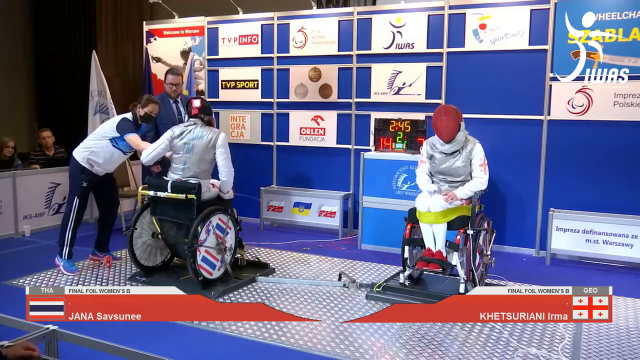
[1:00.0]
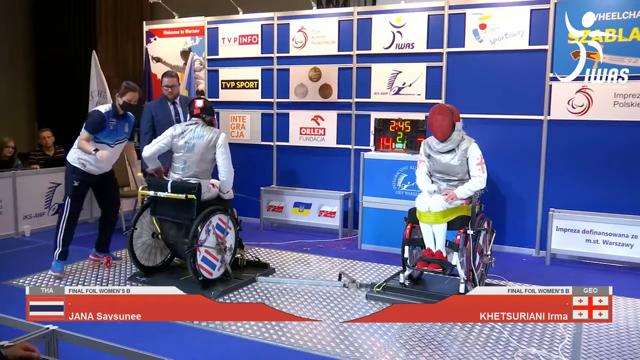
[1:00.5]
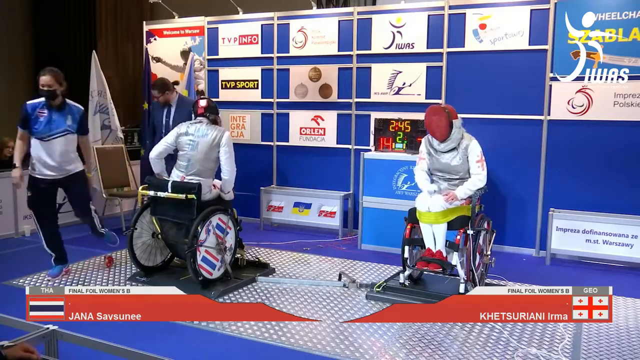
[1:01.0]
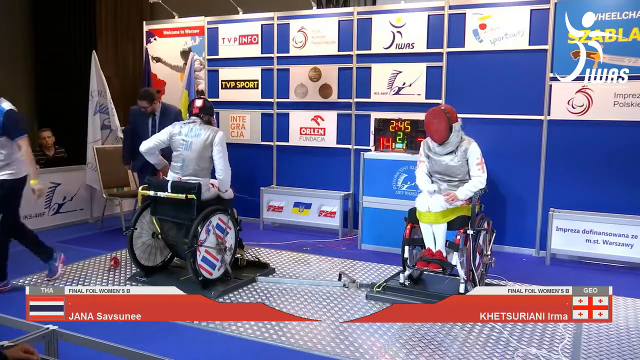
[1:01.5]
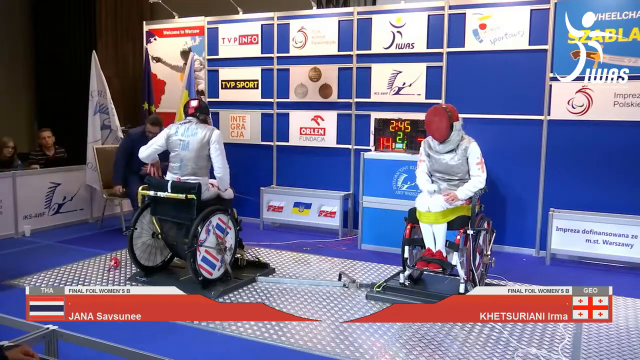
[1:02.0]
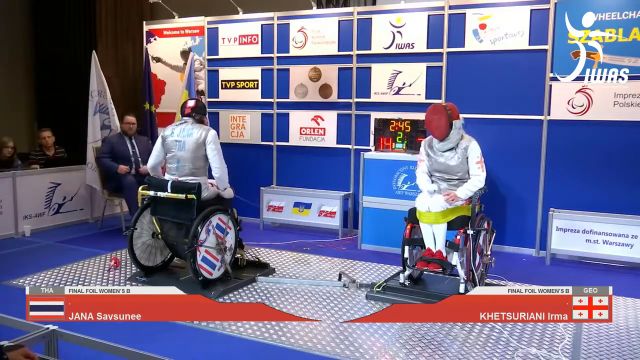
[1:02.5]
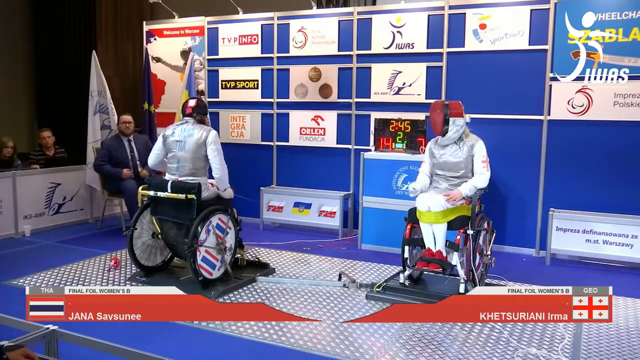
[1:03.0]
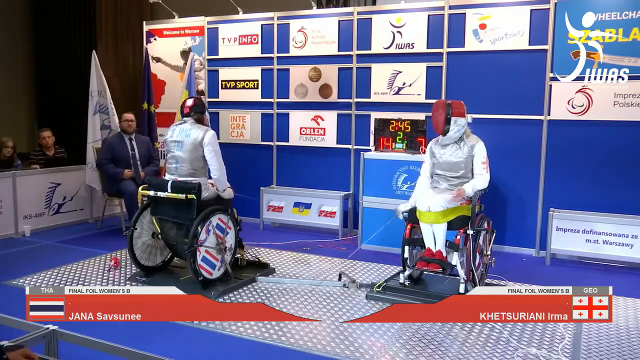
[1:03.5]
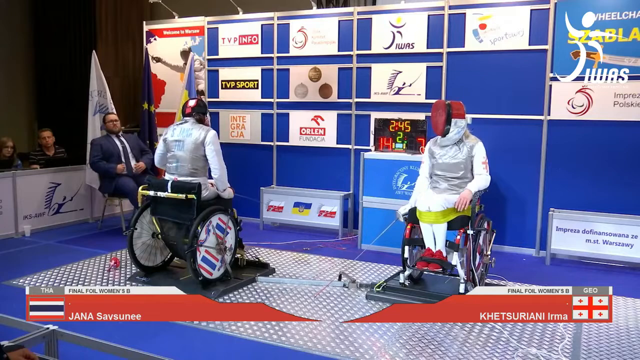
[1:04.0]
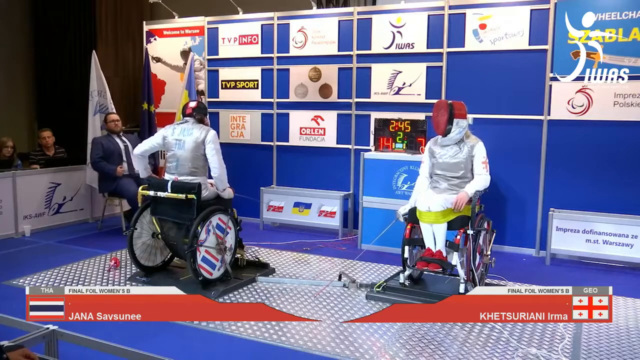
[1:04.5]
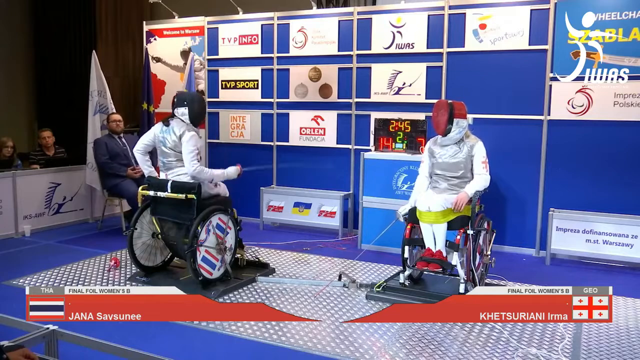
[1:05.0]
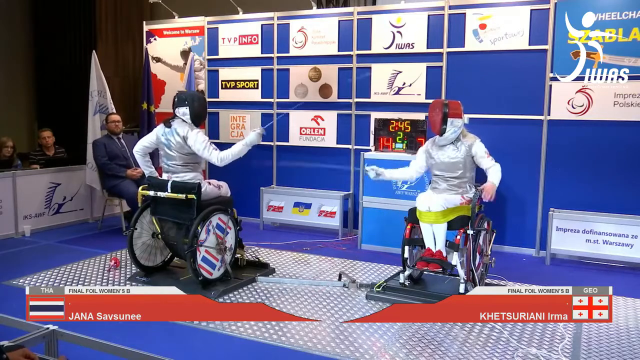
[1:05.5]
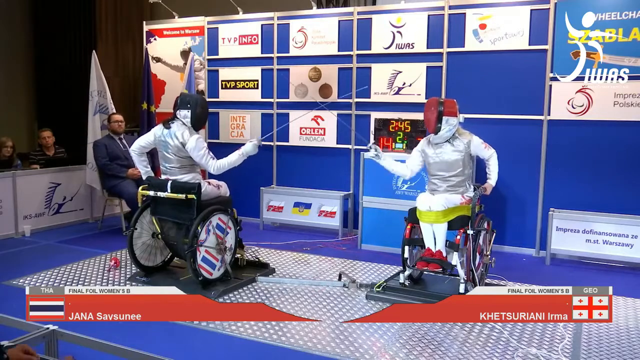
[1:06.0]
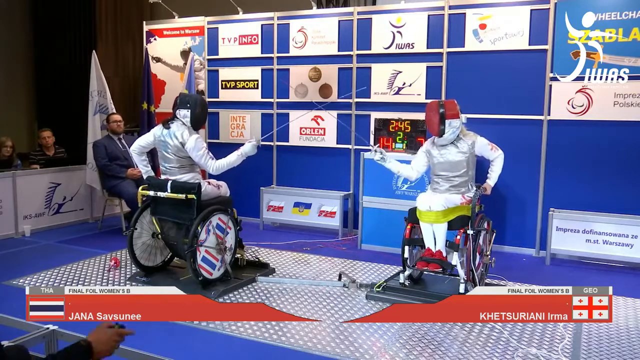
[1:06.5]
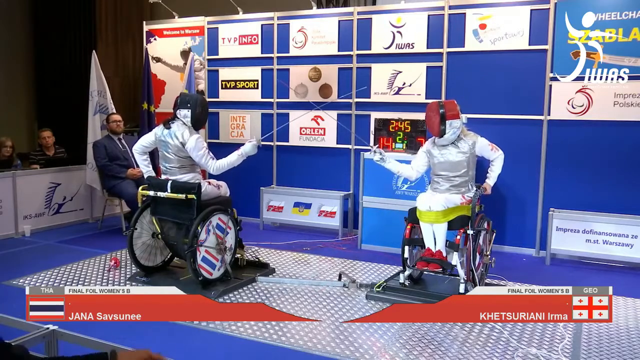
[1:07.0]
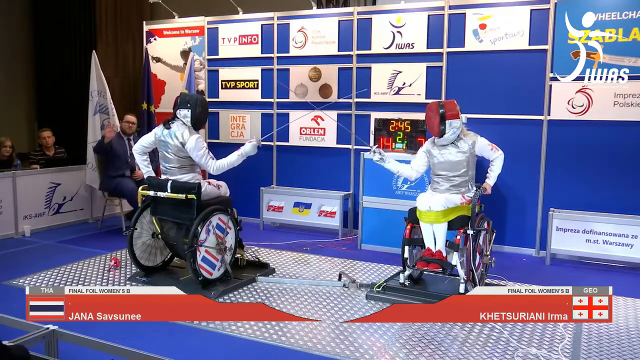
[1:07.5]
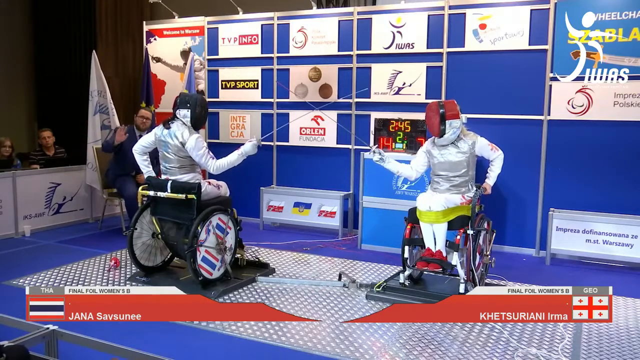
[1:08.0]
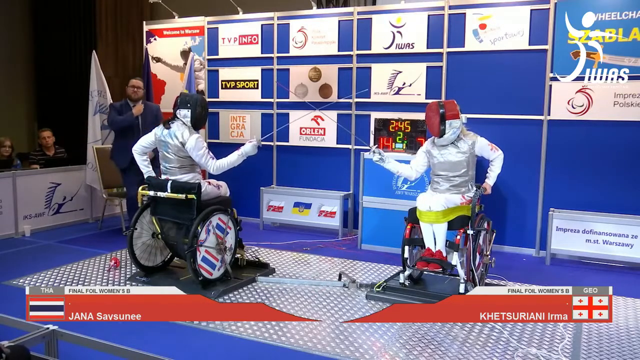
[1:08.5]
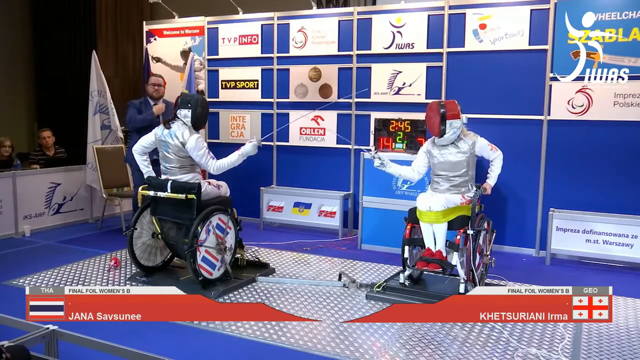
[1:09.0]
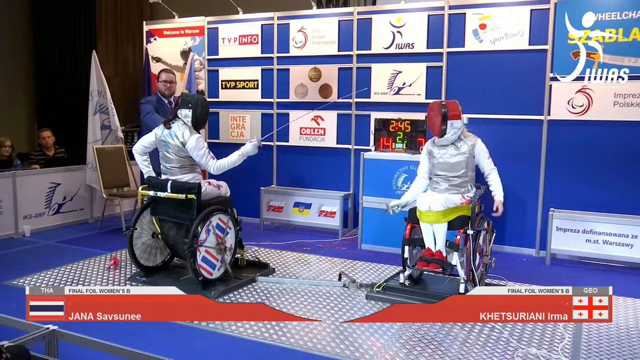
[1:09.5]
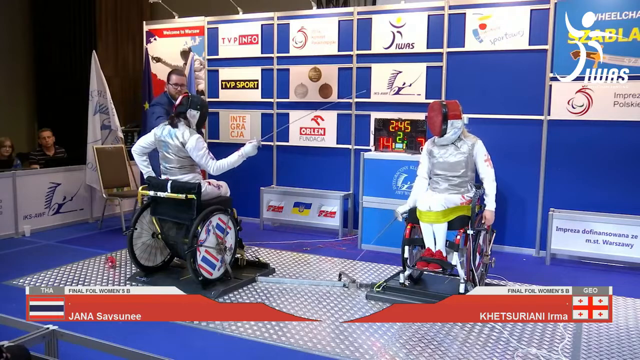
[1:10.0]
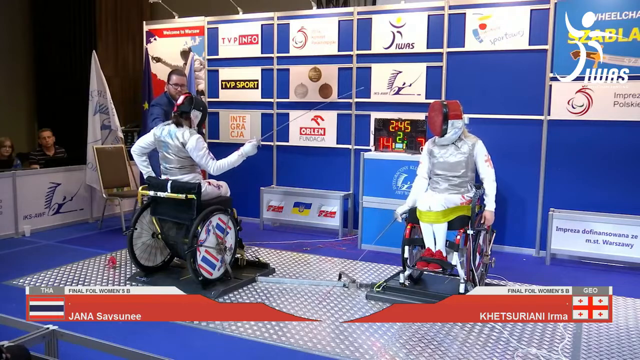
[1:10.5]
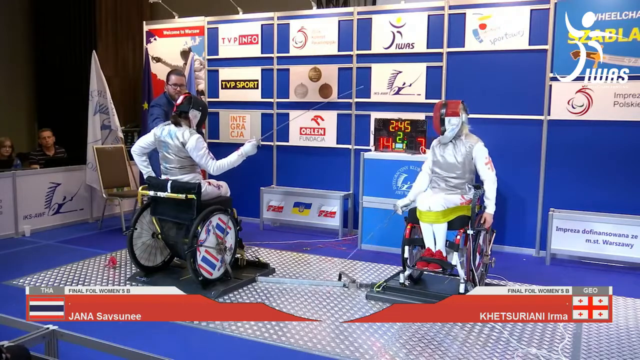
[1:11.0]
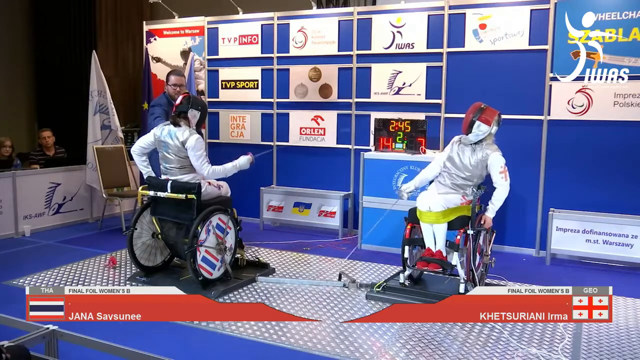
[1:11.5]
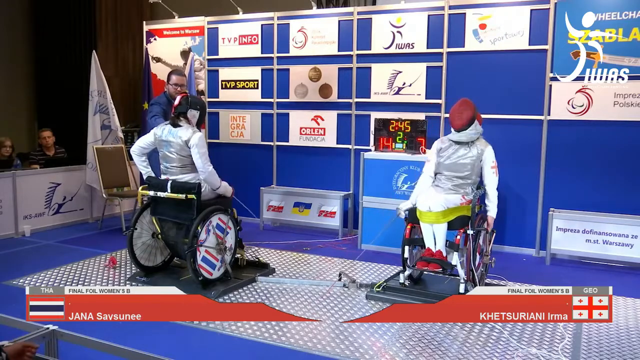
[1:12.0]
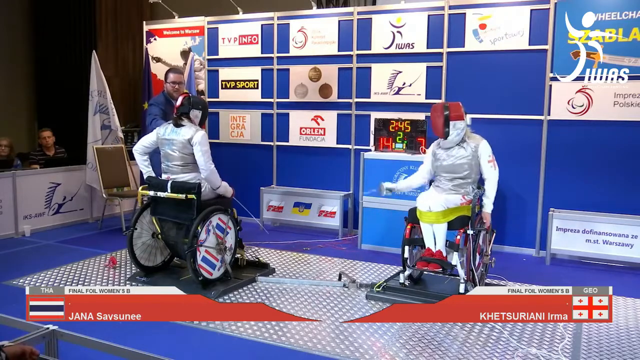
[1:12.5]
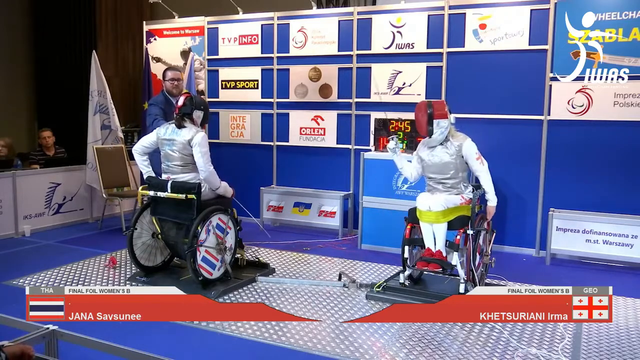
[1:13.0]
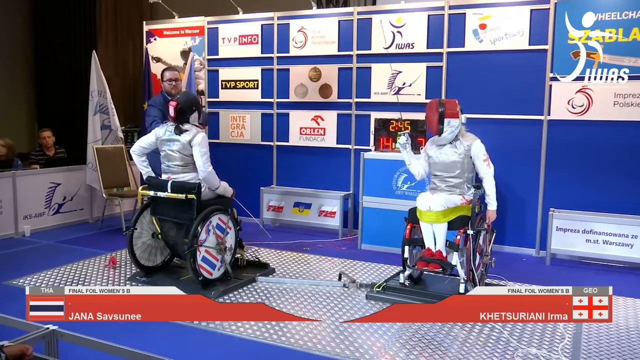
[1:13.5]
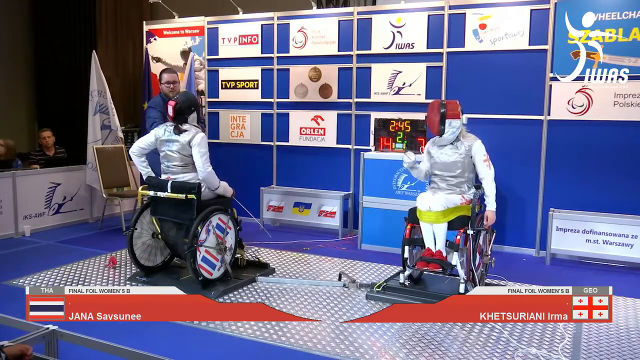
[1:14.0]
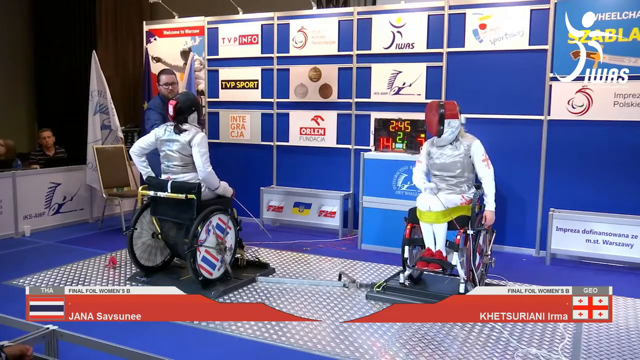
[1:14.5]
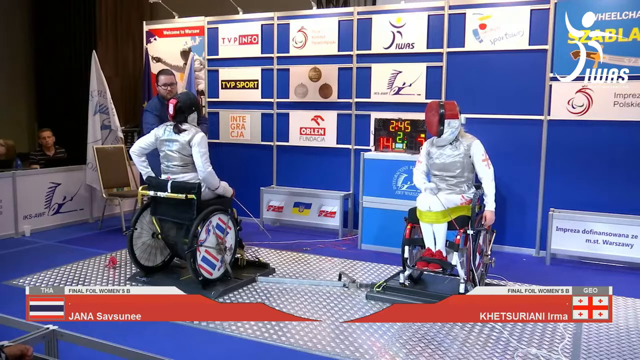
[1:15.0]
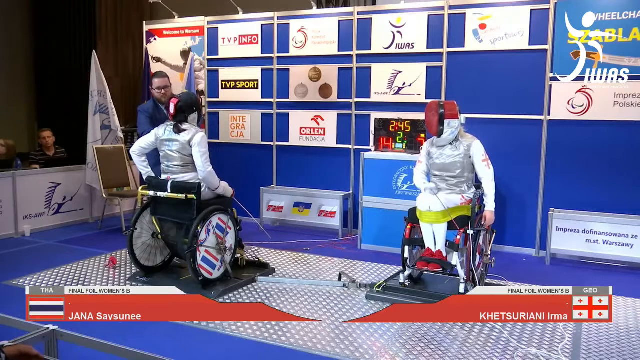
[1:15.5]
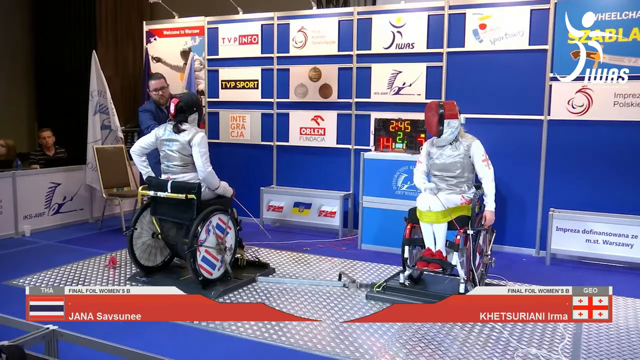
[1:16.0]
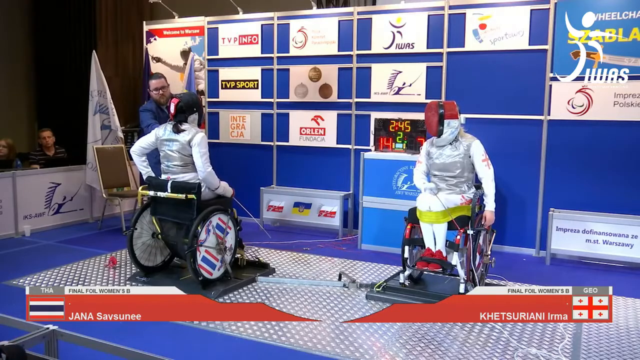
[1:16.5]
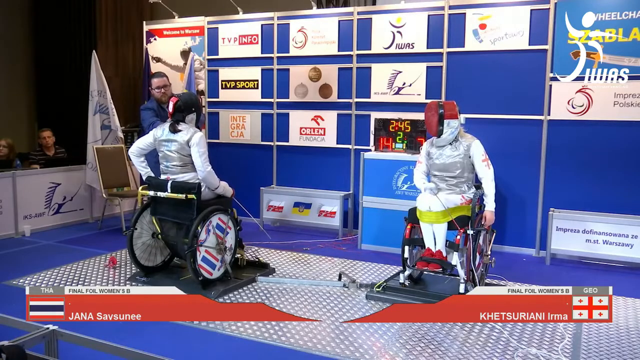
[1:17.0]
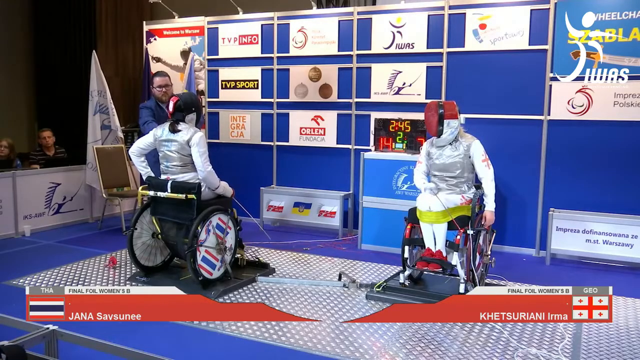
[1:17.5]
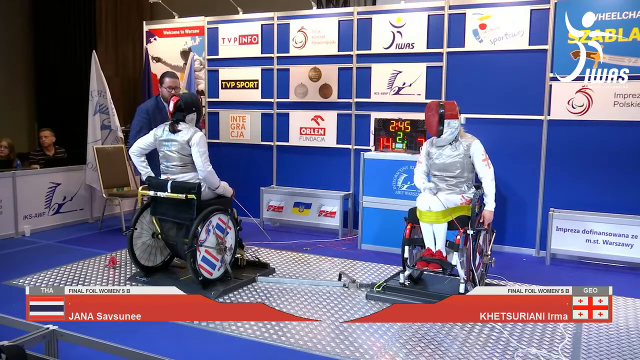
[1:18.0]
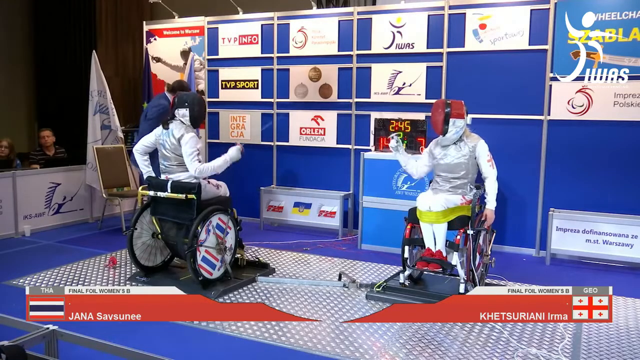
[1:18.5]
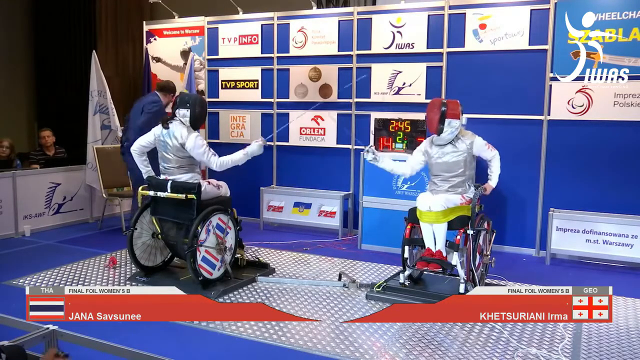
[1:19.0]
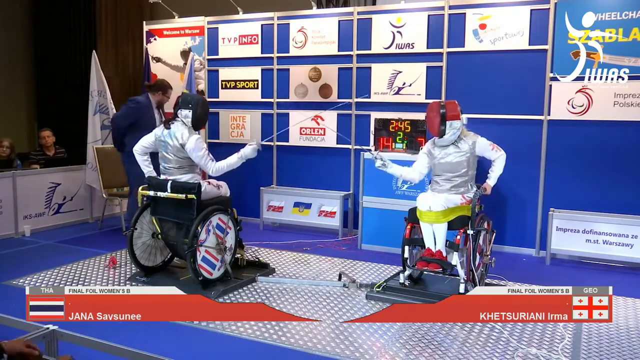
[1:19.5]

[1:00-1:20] After fixing the belt, the judge sits down, and the two fencers put their swords together in the X formation. Right before they begin, the judge stands up again and makes some sort of signal; he appears to tap his left shoulder with his right hand as he walks over to the person on the left, signaling that something is wrong with that person's mask. The mask is fixed, apparently by the judge, and the judge then sits back down in his chair.